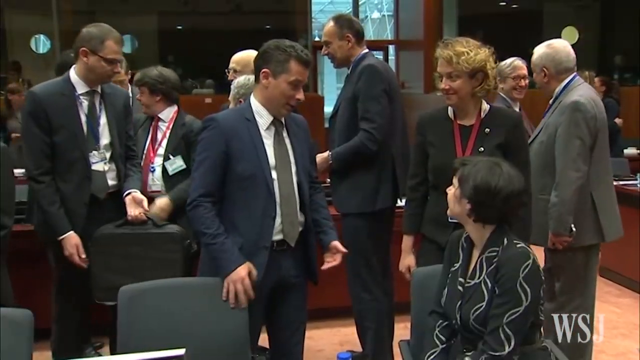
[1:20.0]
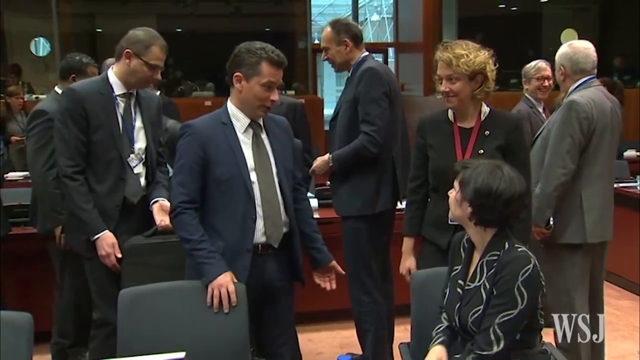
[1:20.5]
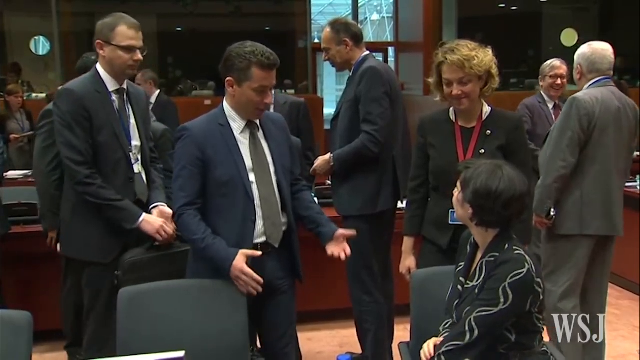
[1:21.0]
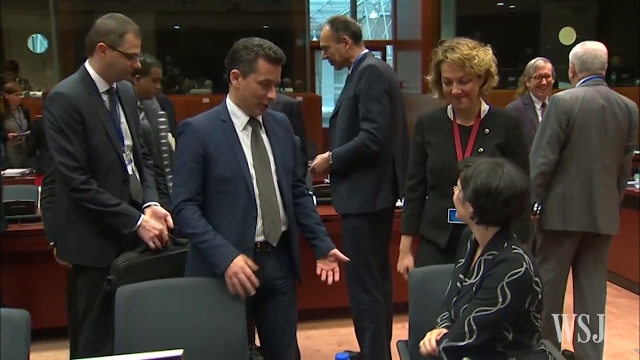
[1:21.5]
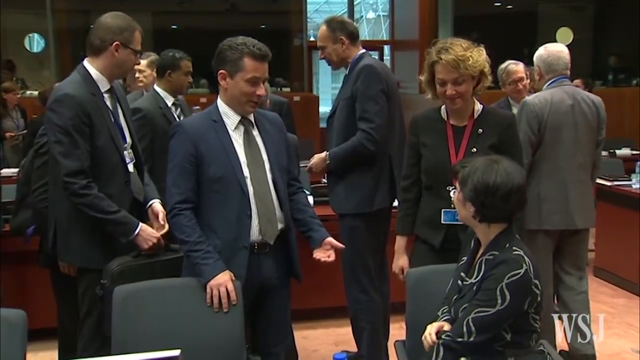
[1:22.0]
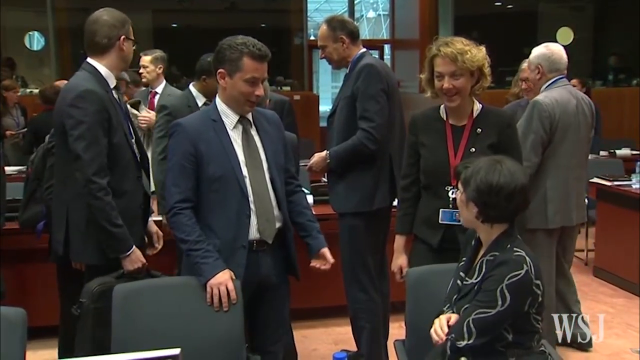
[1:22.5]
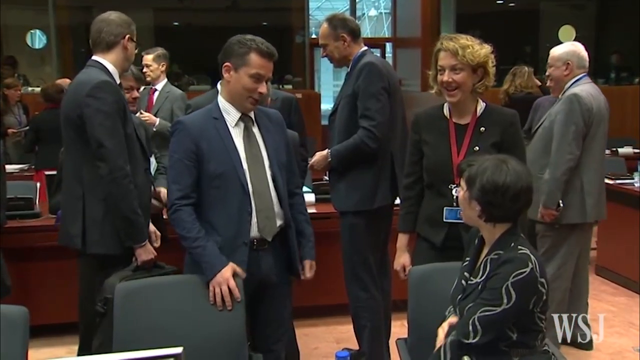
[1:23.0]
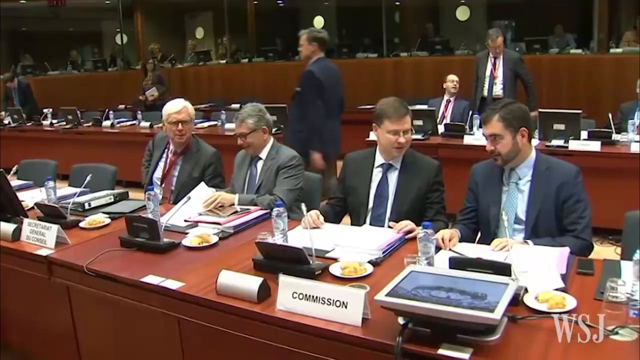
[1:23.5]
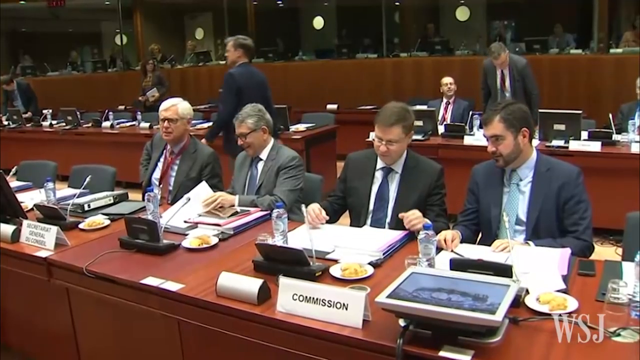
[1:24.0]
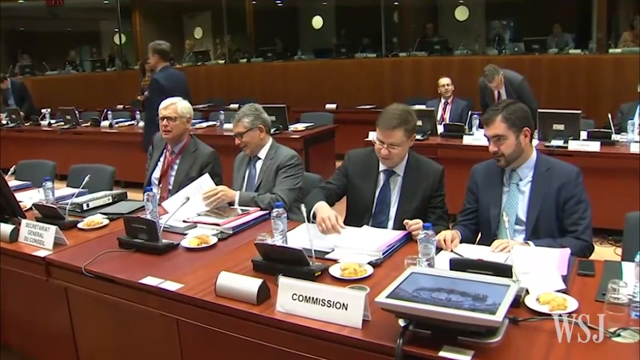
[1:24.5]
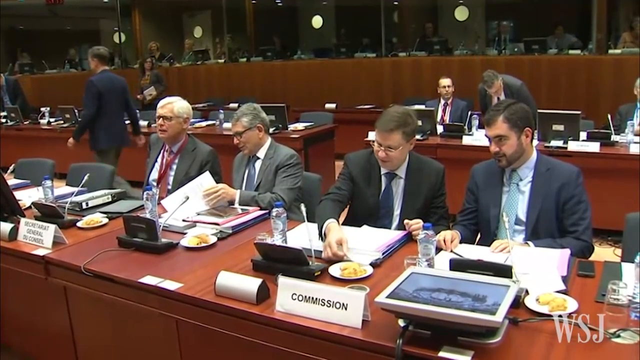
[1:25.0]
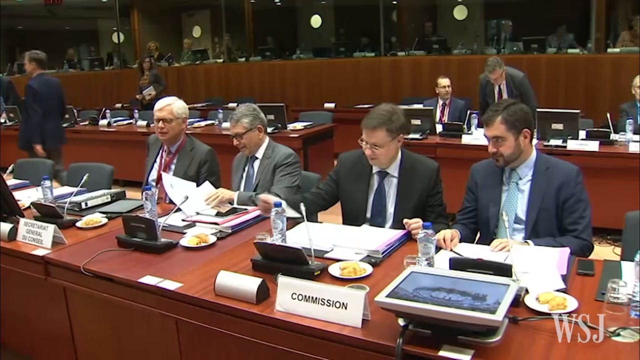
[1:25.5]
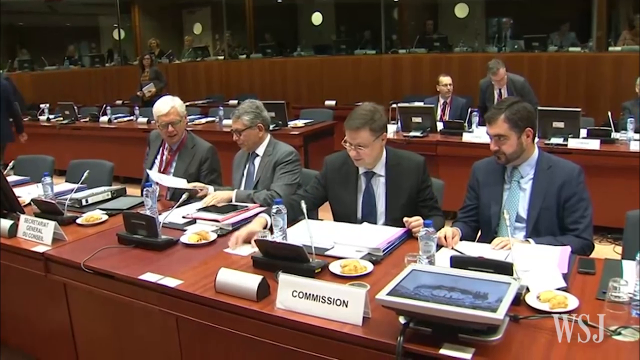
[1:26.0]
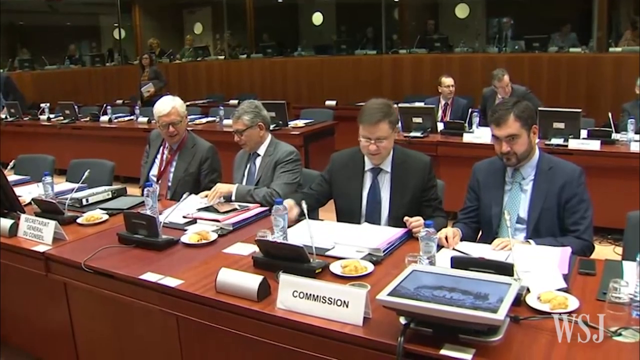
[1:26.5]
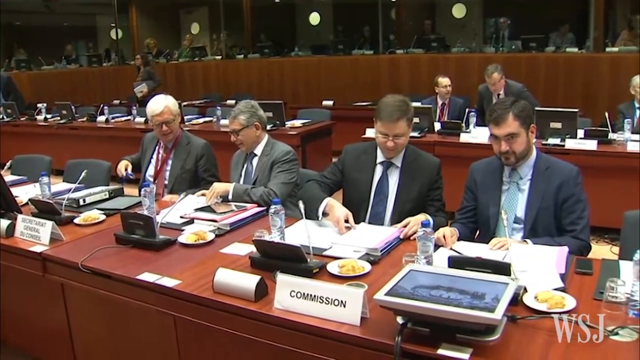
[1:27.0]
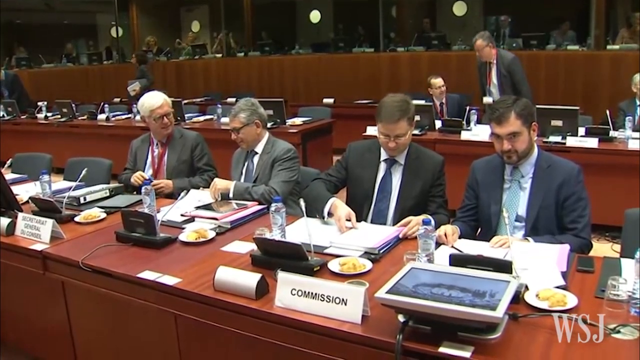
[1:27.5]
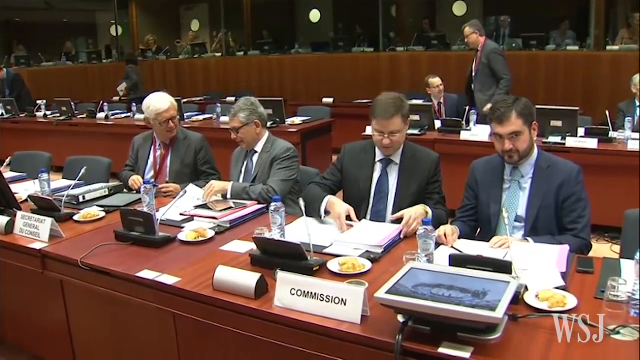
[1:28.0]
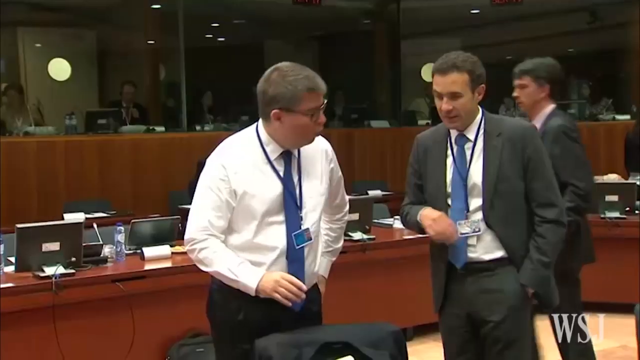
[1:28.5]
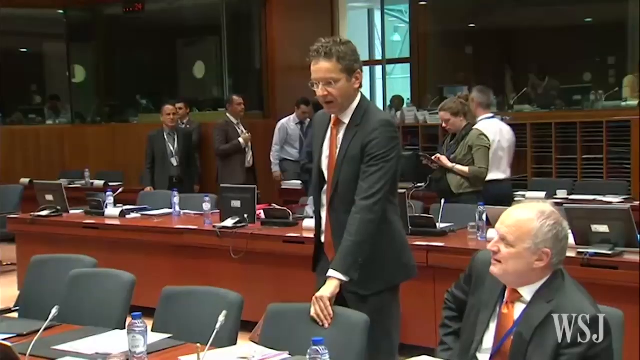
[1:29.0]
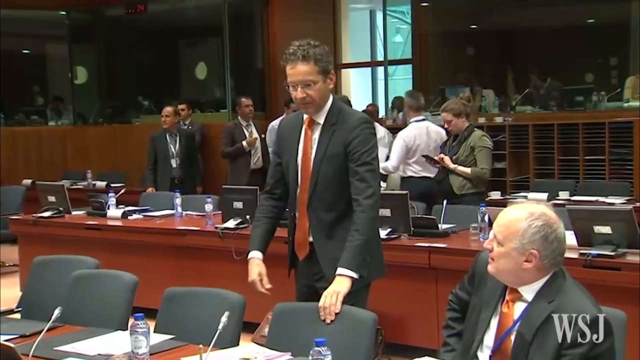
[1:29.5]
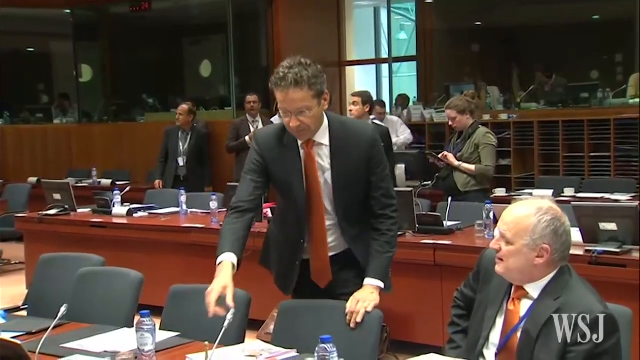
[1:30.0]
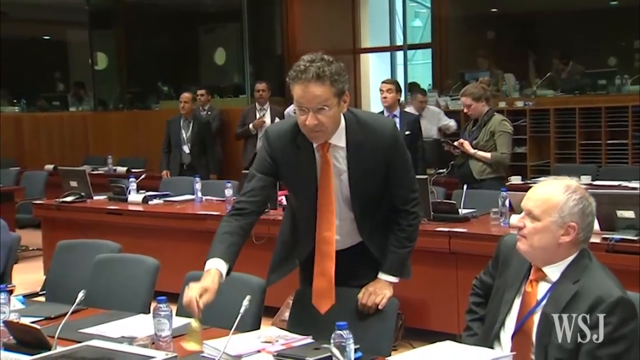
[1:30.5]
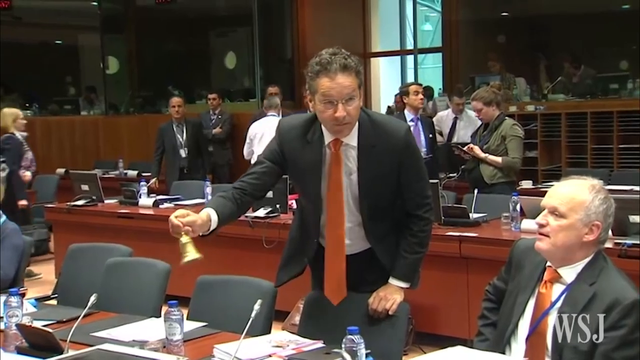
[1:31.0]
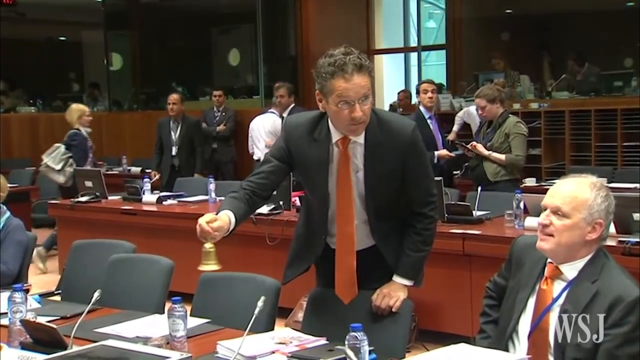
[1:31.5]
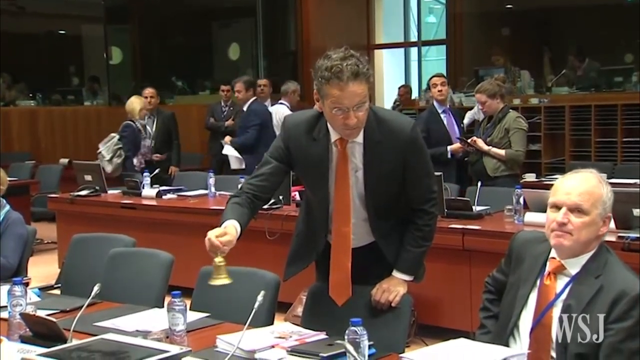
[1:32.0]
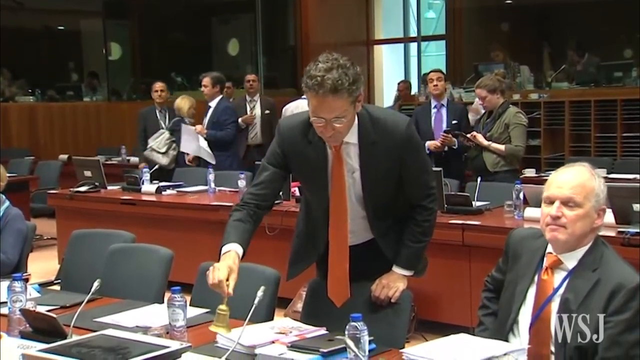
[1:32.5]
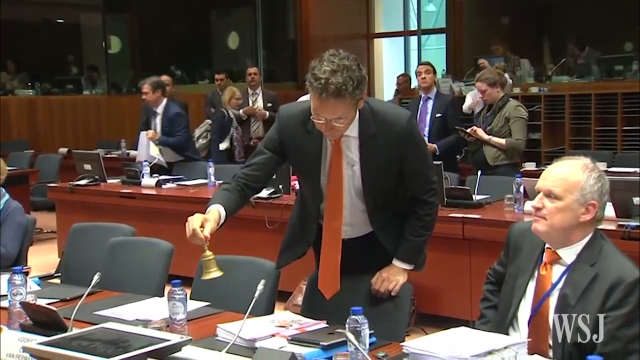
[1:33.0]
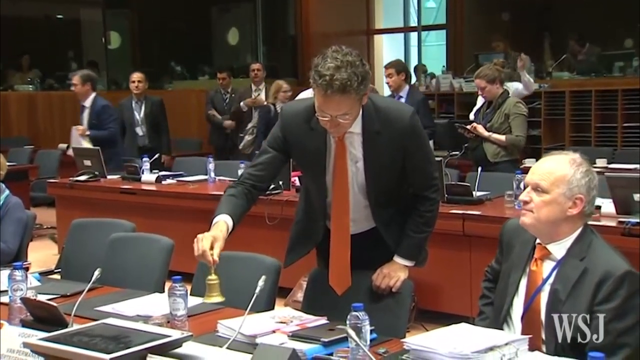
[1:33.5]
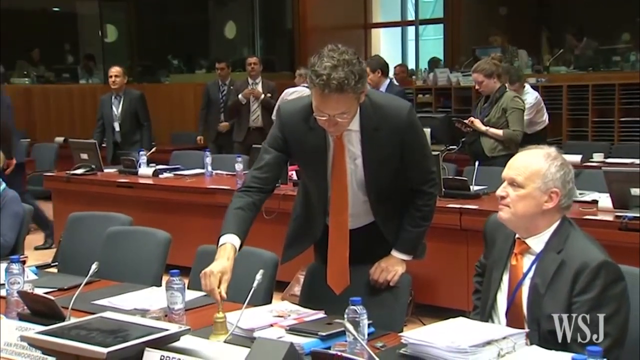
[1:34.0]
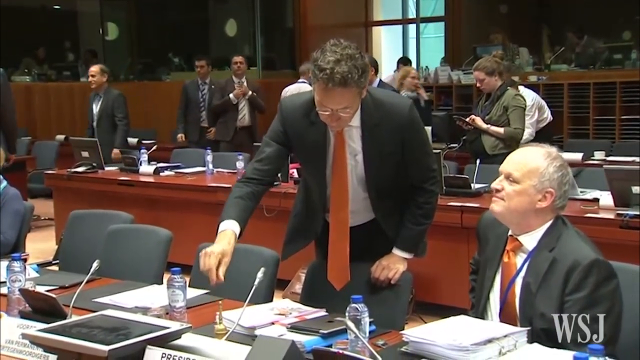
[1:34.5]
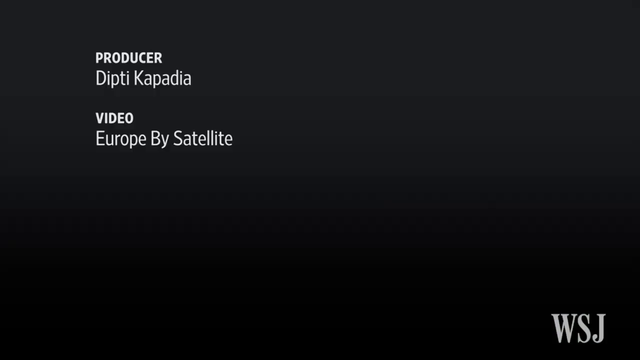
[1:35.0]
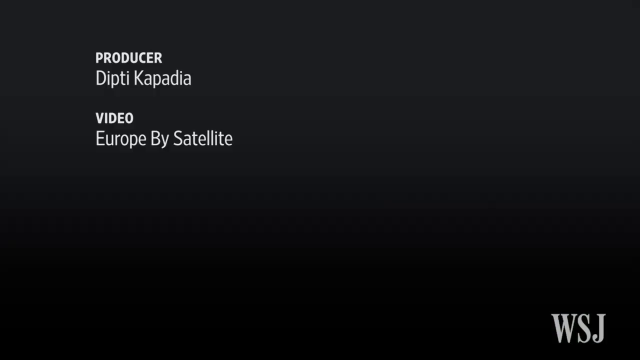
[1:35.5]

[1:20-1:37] Some people are talking. In the lower right corner of the frame a woman sits turned around, her head facing a man standing next to her who wears a dark jacket, a light shirt and a dark tie. Then a brown table is shown with several objects on it, such as white plates, plastic bottles and white sheets of paper. Four people sit on four dark gray chairs behind the table, wearing dark jackets, light shirts and ties. Some of the men move sheets of paper on the table in front of them. In the last part, two men appear in the foreground, positioned middle right, wearing dark jackets, orange ties and white shirts. The man on the left has a golden bell in his hand, which he rings for a few moments before pressing it again on the table.